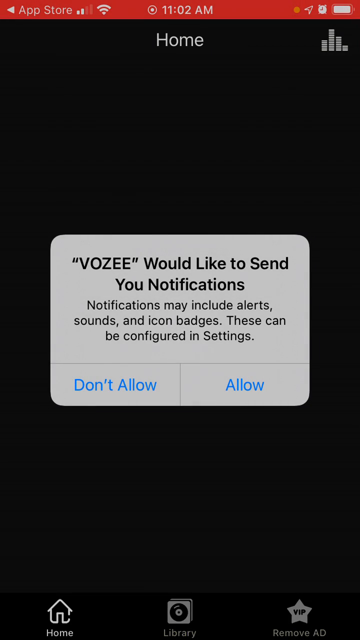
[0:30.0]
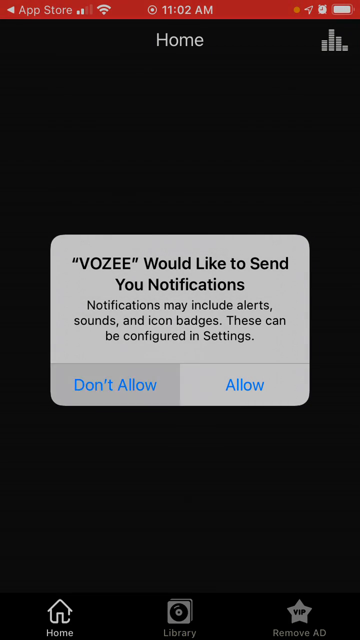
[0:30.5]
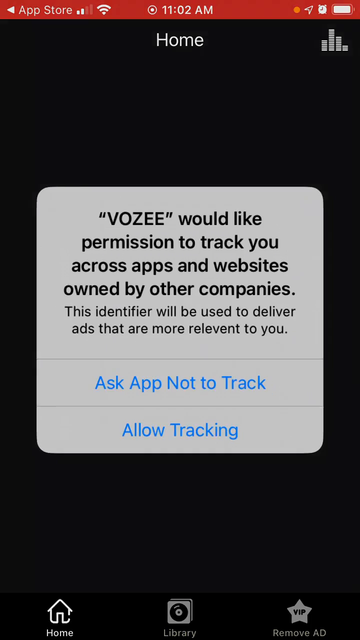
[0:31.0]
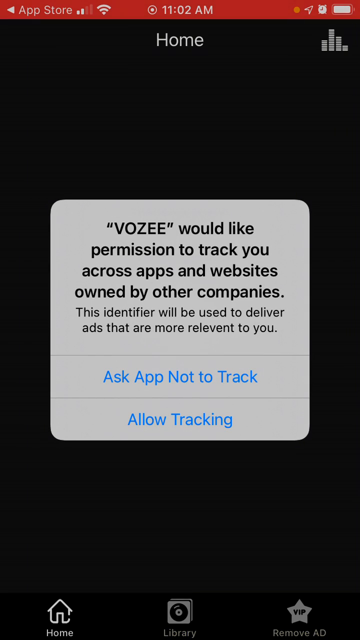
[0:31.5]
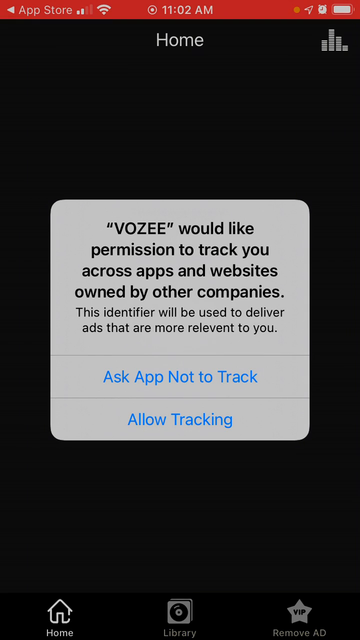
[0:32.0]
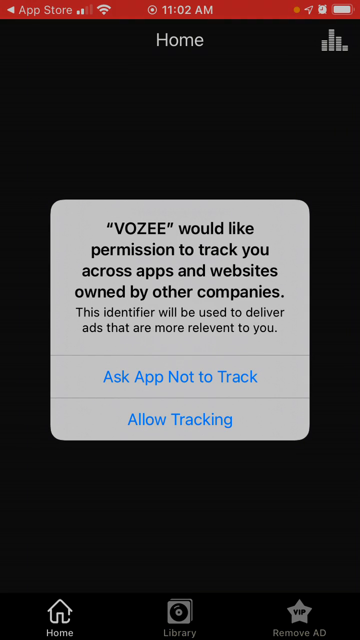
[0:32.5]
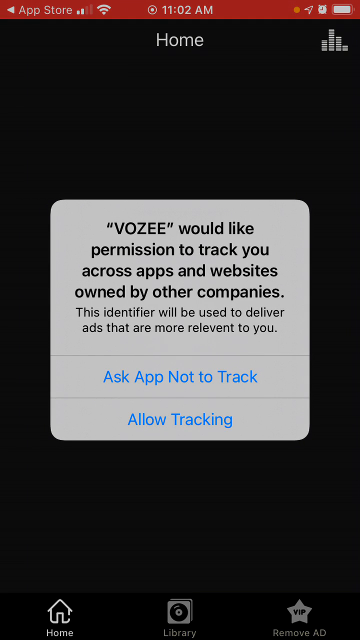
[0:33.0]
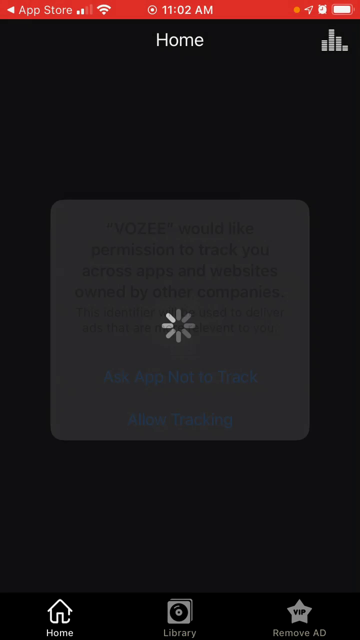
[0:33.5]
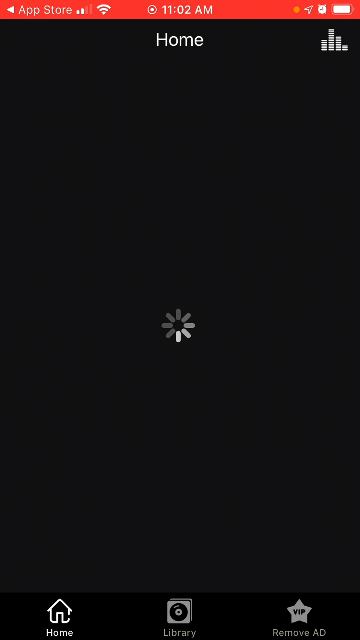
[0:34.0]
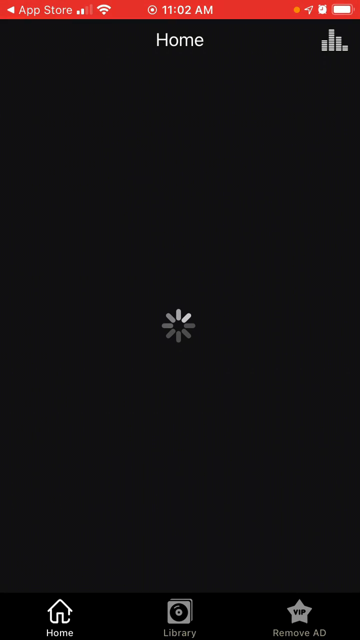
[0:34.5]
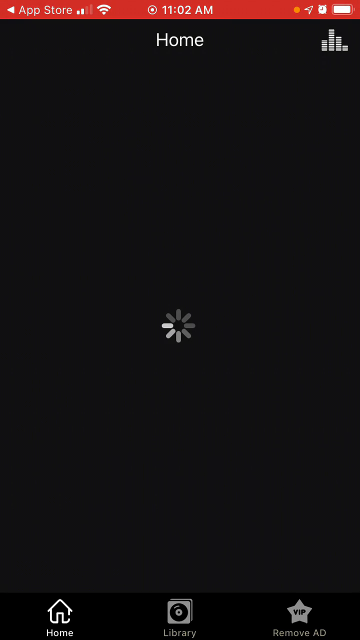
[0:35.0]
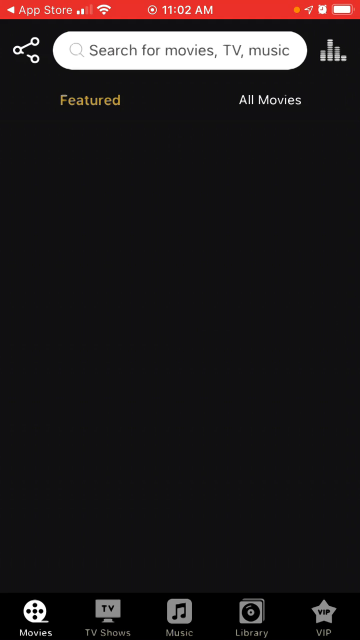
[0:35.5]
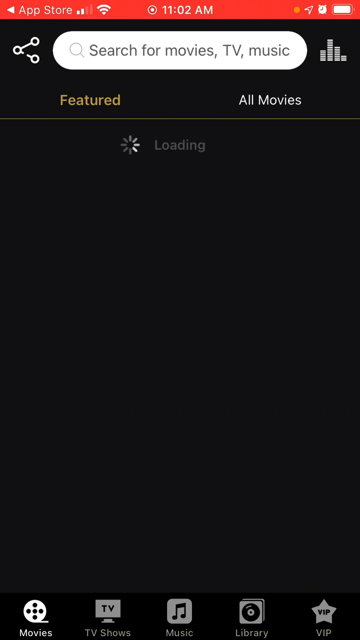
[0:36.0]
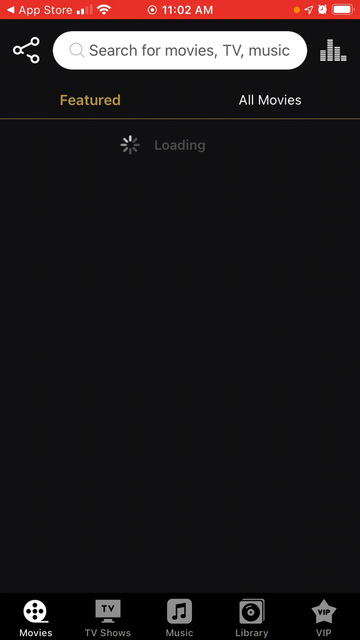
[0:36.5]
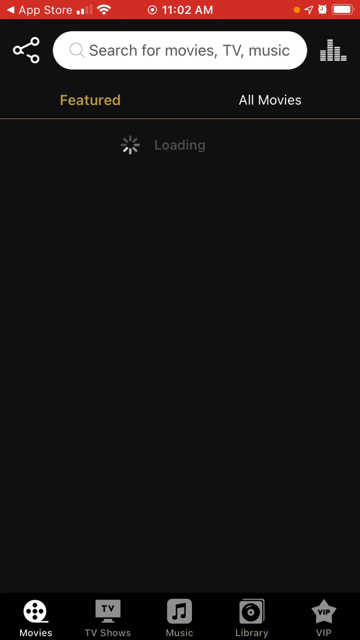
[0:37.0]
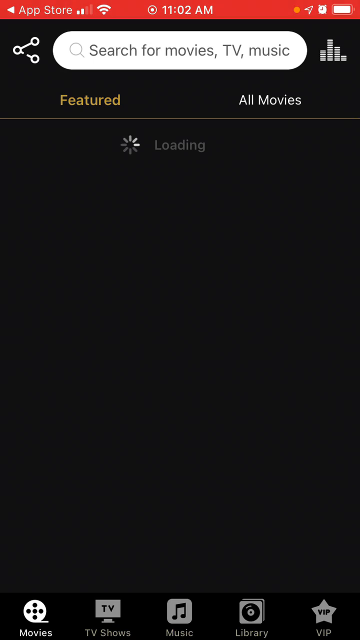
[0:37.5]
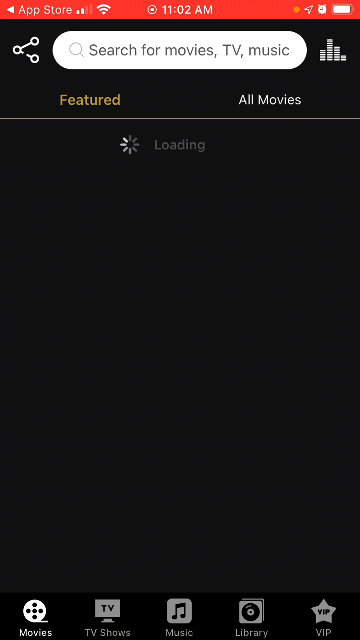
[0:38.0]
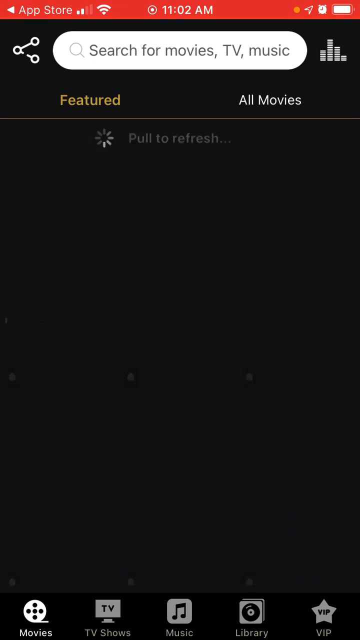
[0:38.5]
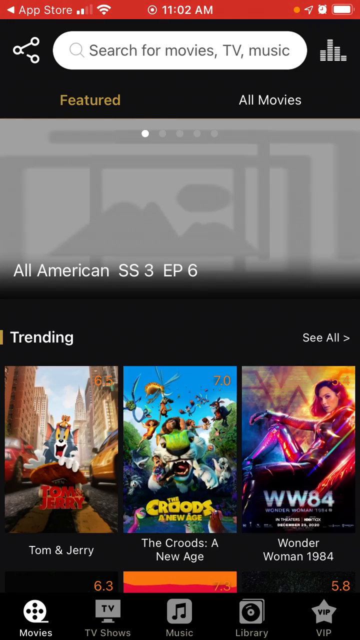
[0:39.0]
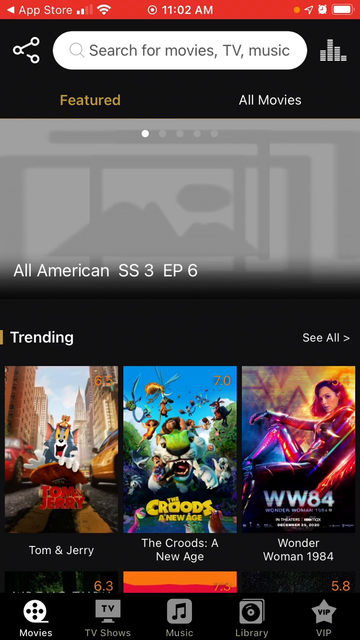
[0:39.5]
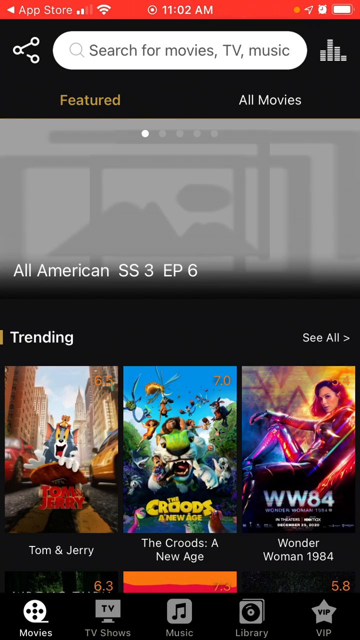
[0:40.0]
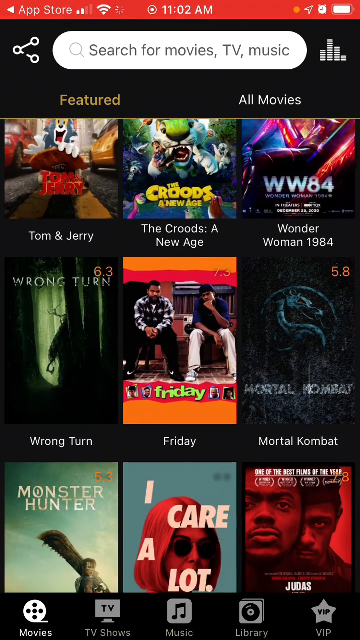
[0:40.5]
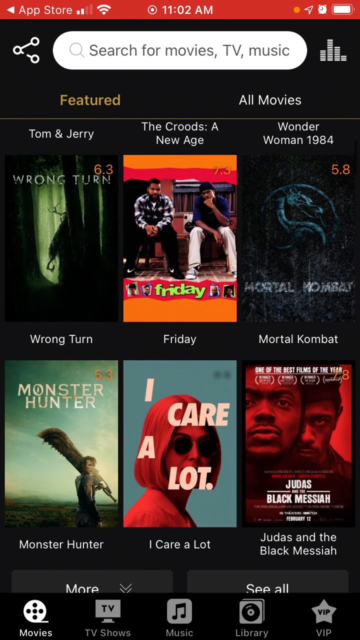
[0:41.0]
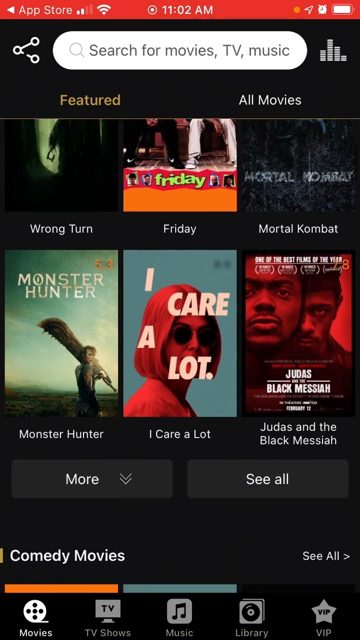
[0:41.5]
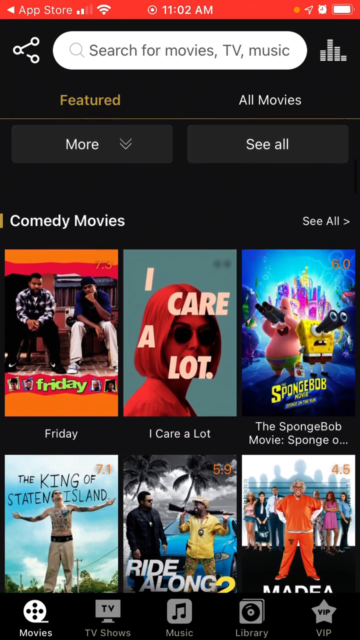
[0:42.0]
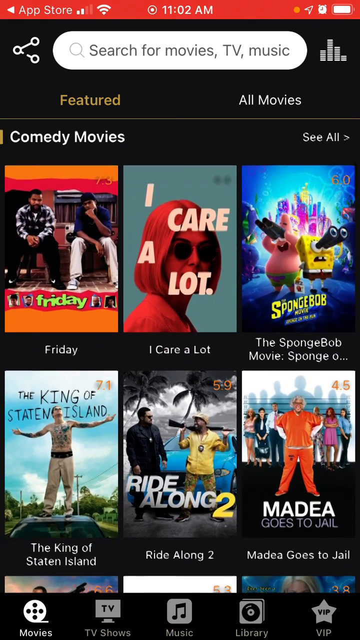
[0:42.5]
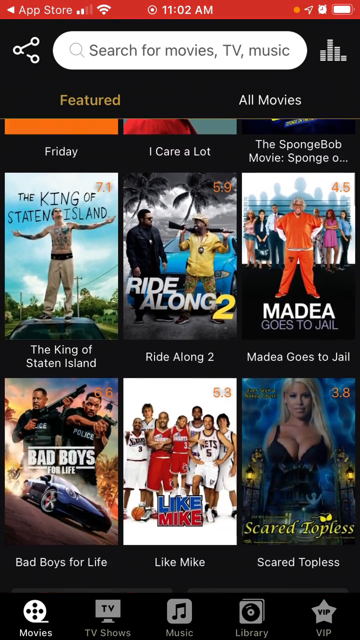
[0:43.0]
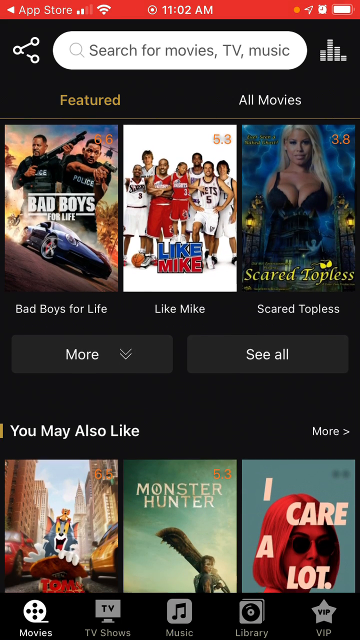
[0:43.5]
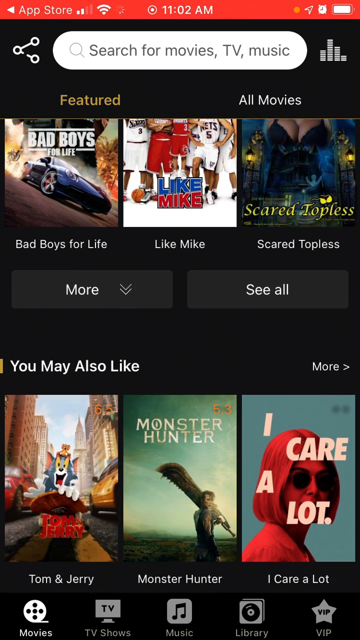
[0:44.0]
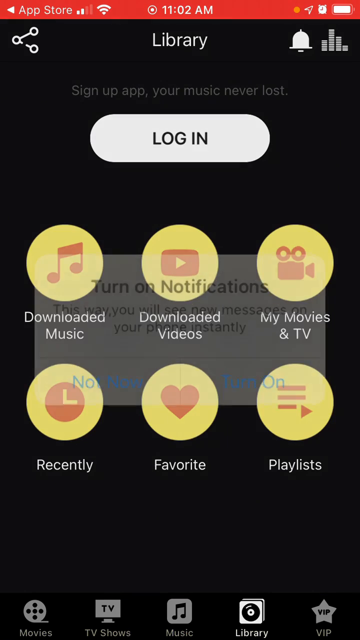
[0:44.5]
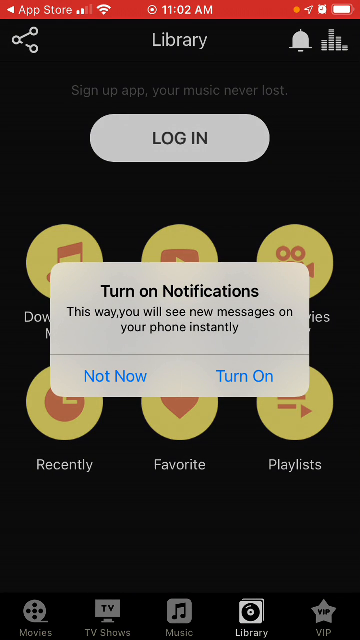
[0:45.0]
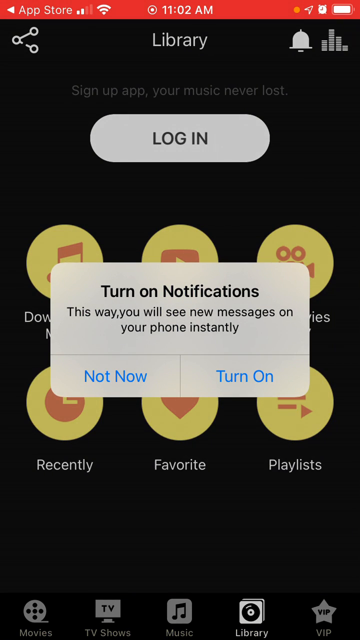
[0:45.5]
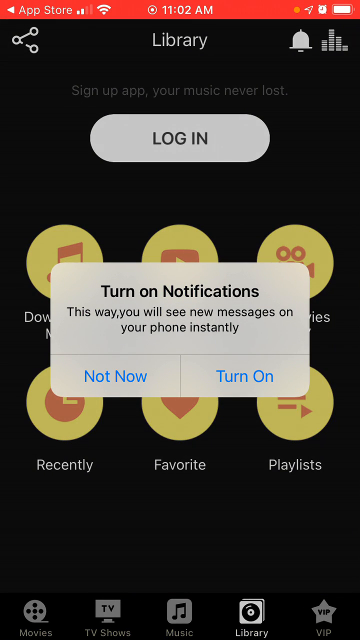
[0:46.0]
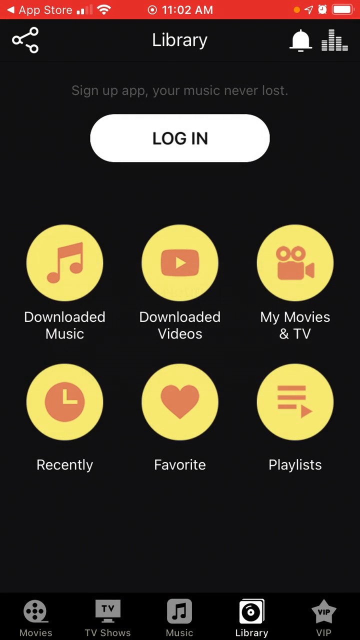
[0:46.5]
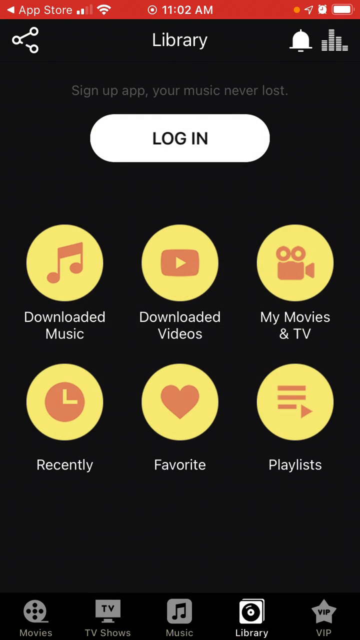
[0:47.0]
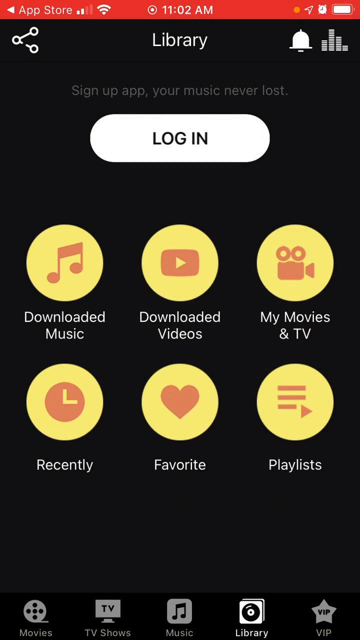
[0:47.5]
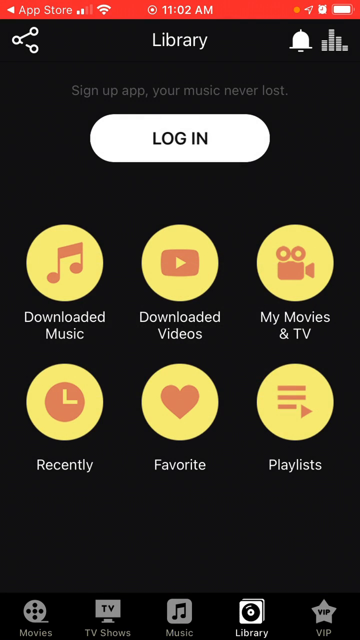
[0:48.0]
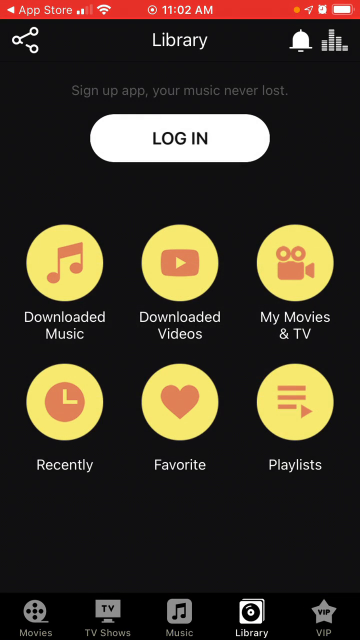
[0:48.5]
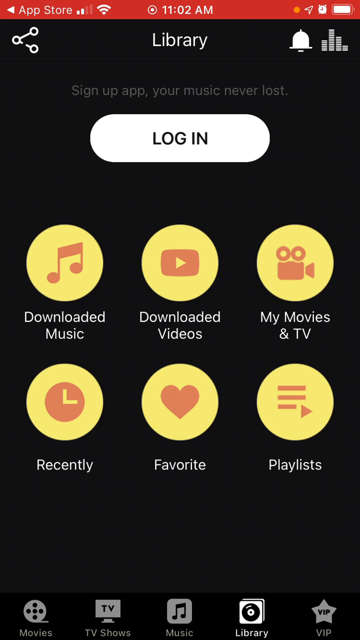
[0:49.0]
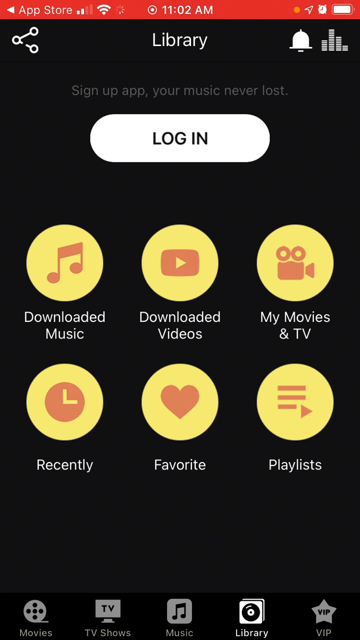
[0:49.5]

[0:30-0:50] A phone screen recording shows a solid black background with "home" at the top. Four bars are in the top right corner, and a red bar runs straight across the very top reading "App Store." The status bar shows the Wi-Fi symbol, the time 11.02am, and a nearly full battery. A pop-up reads "Vozee would like to send you notifications, notifications may include alerts, sounds, and icon badges, these can be configured in settings," with "don't allow" and "allow" buttons below. It clears, and a grey square pop-up appears reading "Vozee would like permission to track across apps and websites owned by other companies, this identifier will be used to deliver ads that are more relevant to you." Beneath it are two blue buttons, "ask app not to track" and "allow tracking." A spinning wheel appears and loads for a while, with "loading" text at the top. A grey bar then shows sort of a thumbnail icon and white text reading "All American SS3 episode 6." Trending items appear below it: The Croods, Tom and Jerry, and Wonder Woman 84. The user scrolls down through the covers of several other movies, including Friday, Spongebob, I Care A Lot, and The King of Staten Island. Another pop-up reads "turn on notifications, this way you will see new messages on your phone instantly," with "not now" and "turn on" buttons. A screen then appears with a big login button at the top and six yellow buttons below it, ranging from downloaded music to videos, my movies, recent favorites, and playlists.